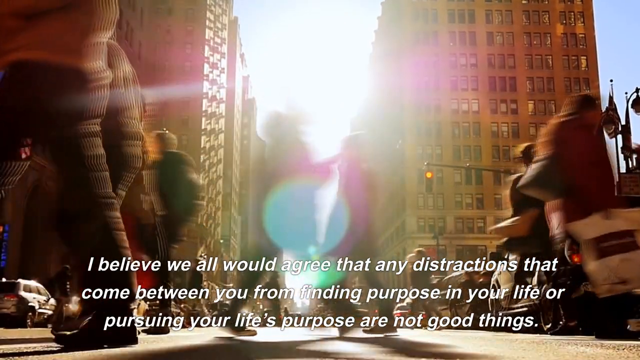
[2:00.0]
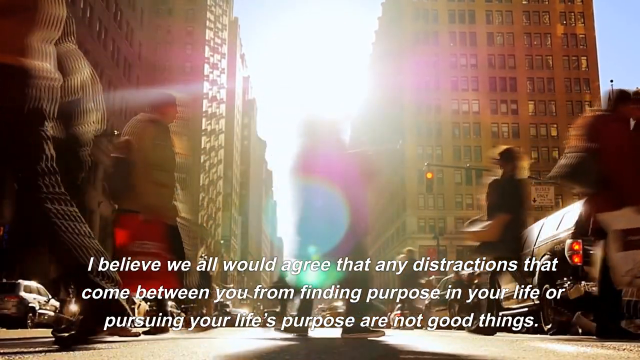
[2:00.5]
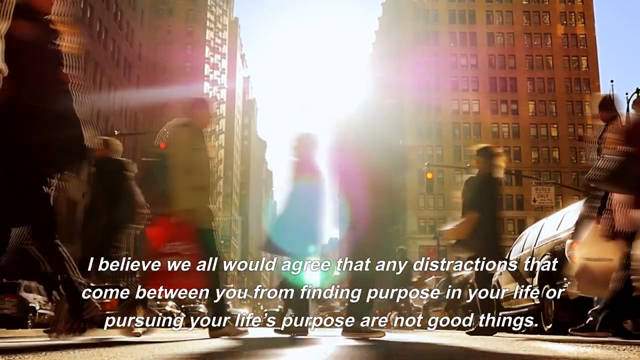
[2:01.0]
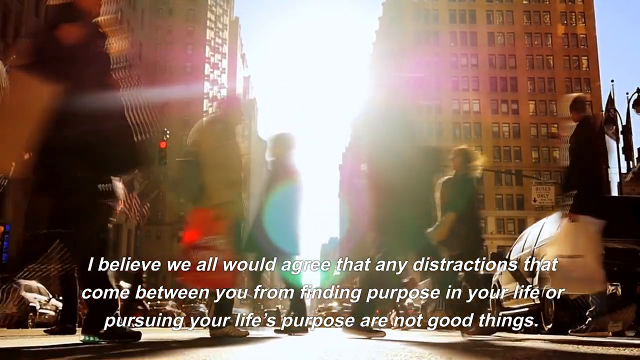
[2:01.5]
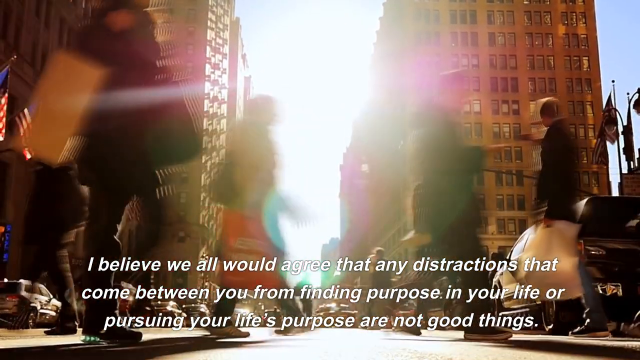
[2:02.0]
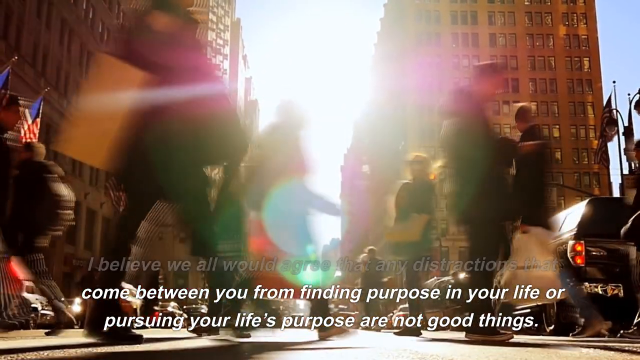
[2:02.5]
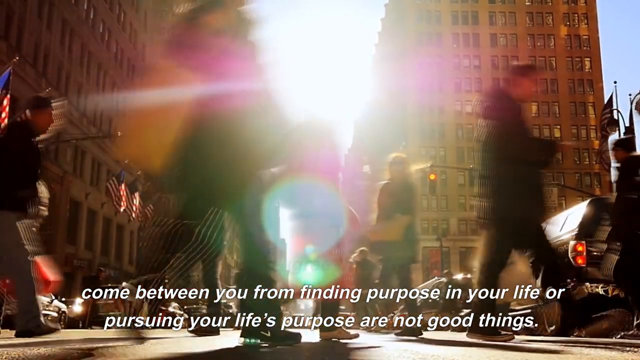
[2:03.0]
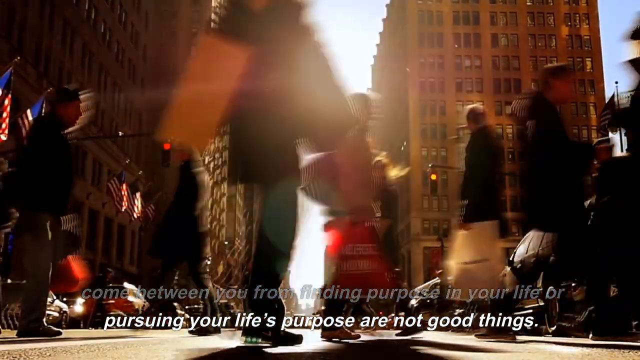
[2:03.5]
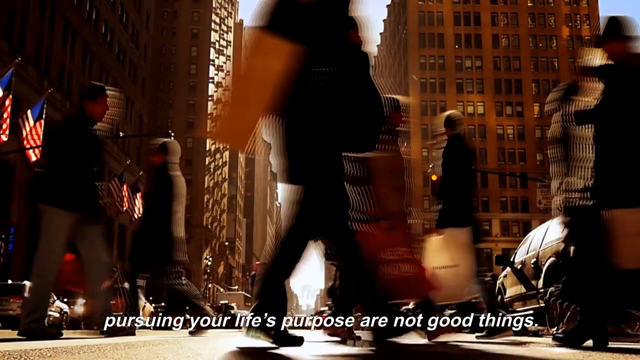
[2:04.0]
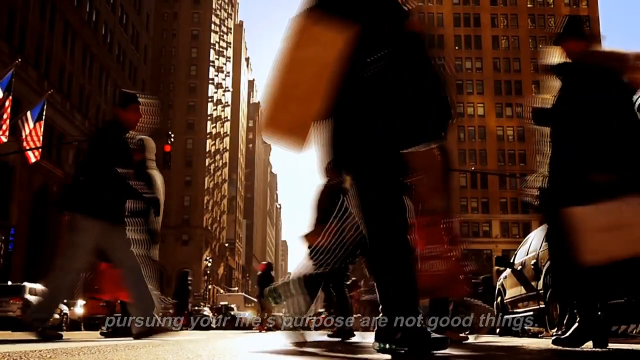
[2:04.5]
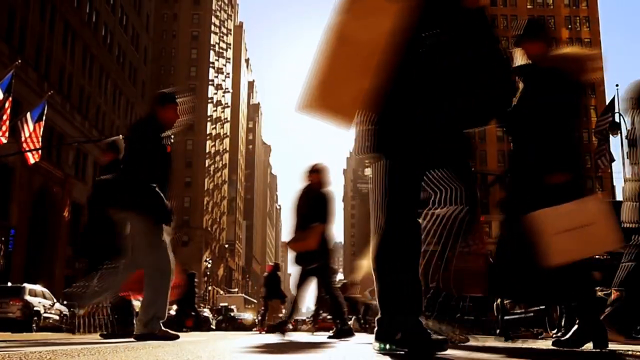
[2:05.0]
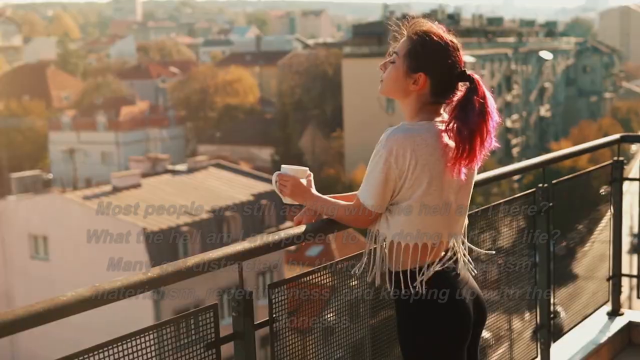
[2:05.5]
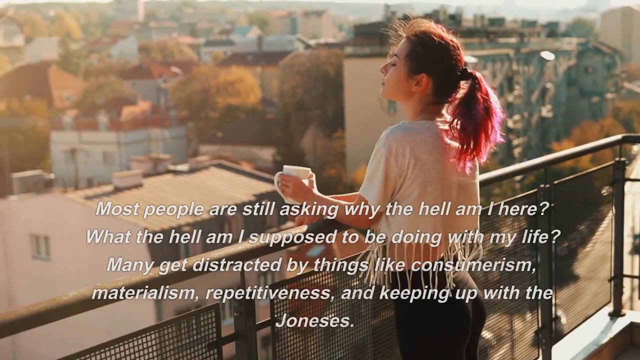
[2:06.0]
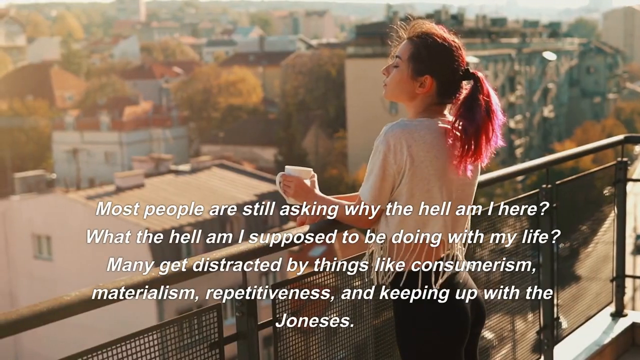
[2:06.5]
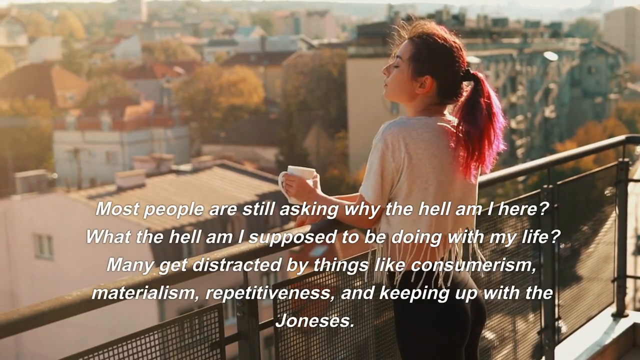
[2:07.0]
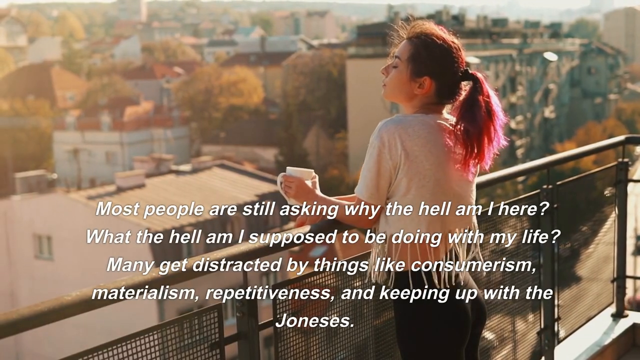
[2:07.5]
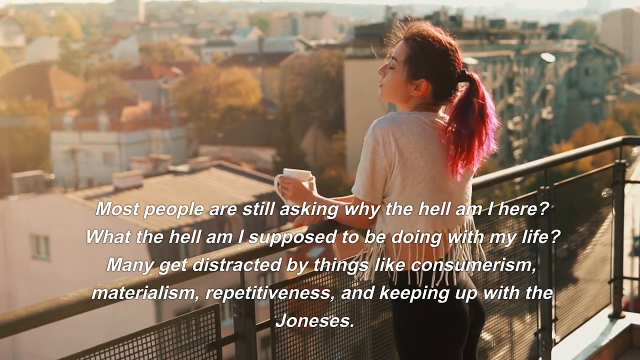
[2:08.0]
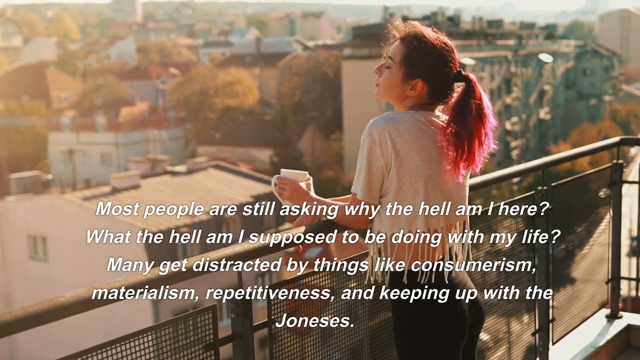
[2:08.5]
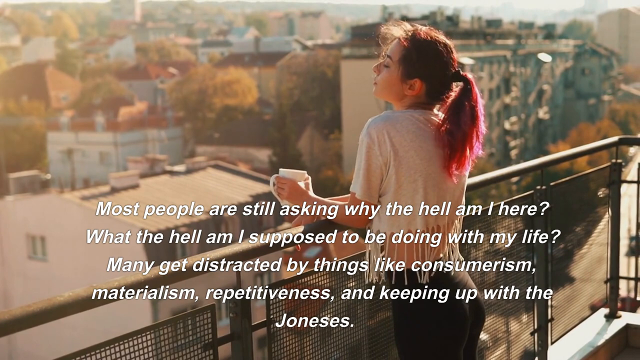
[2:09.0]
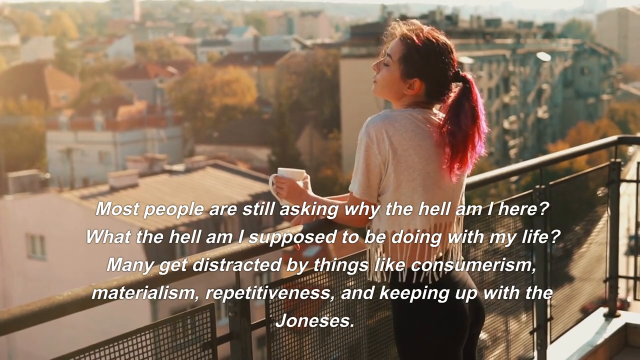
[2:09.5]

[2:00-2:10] A woman stands on a modern balcony with a metal fence around it, looking over a city landscape, breathing in the fresh air and holding a mug of coffee. Her hair is tinted a sort of purple colour. The caption reads: "most people are still asking why the hell am I here? What the hell am I supposed to be doing with my life? Many get distracted by things like consumerism, materialism, repetitiveness and keeping up with the Joneses." She looks relaxed.